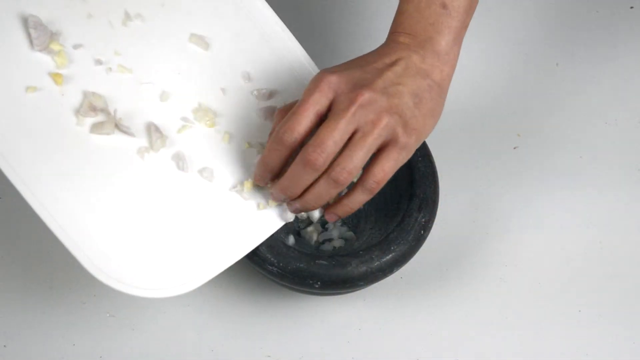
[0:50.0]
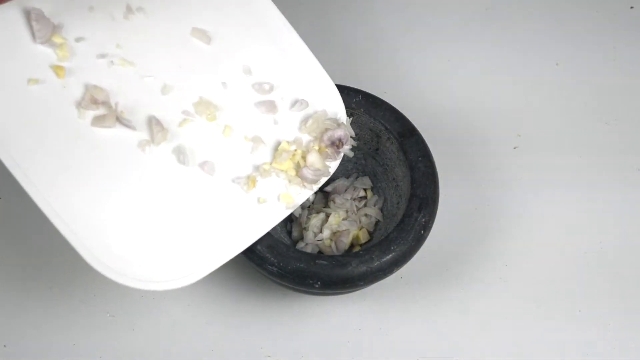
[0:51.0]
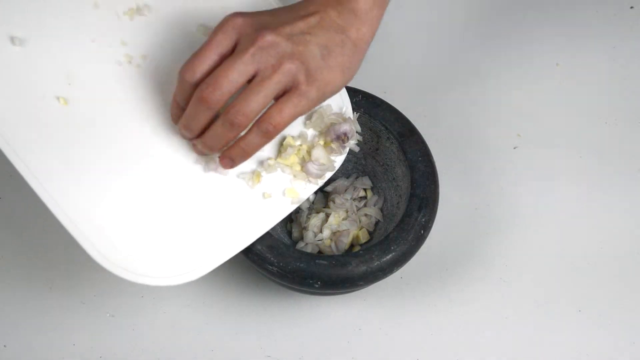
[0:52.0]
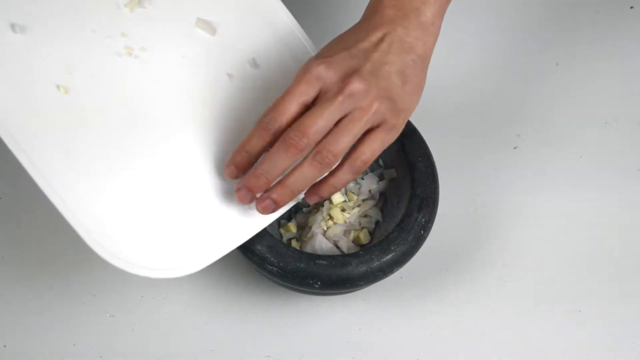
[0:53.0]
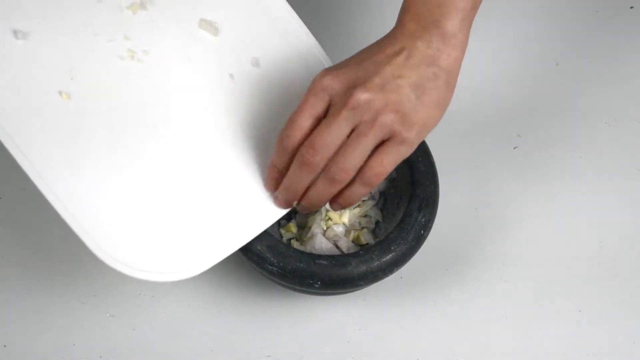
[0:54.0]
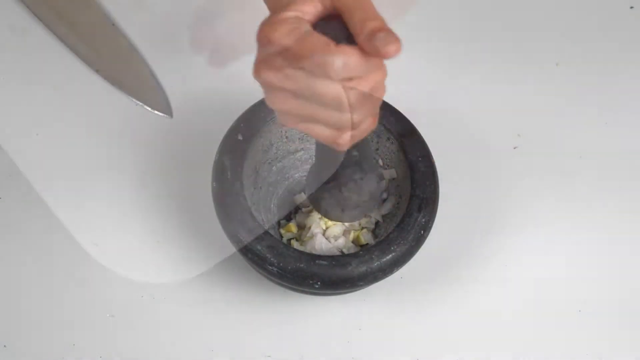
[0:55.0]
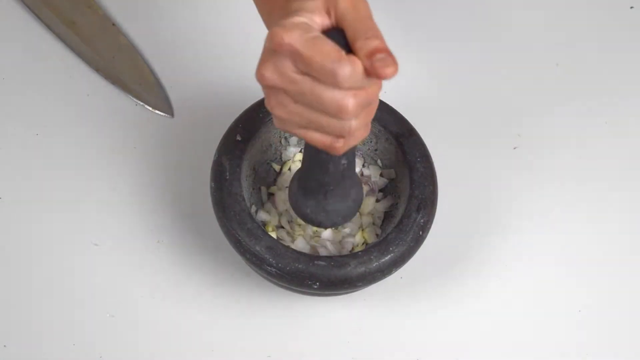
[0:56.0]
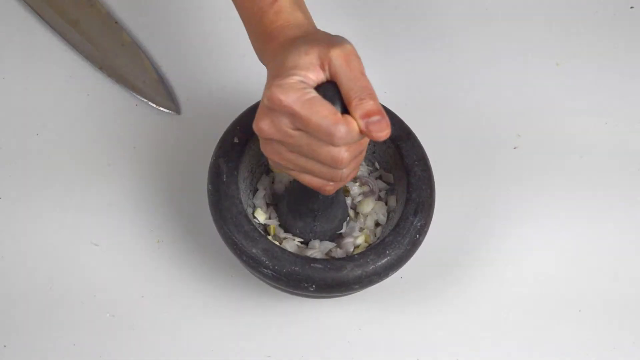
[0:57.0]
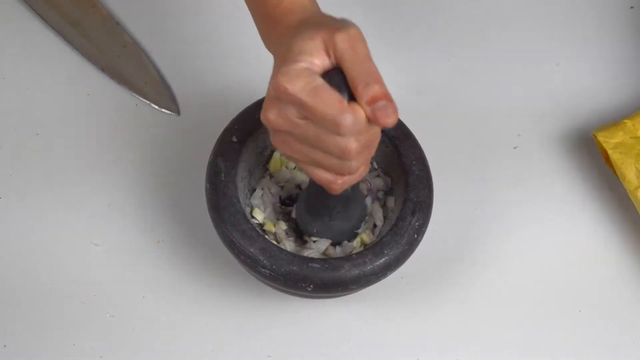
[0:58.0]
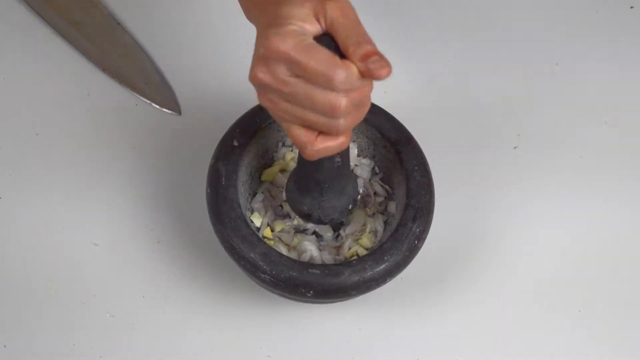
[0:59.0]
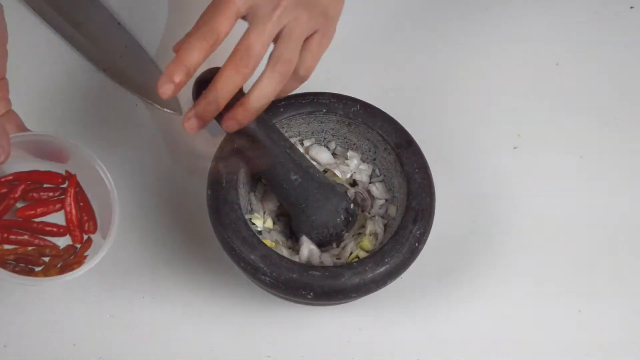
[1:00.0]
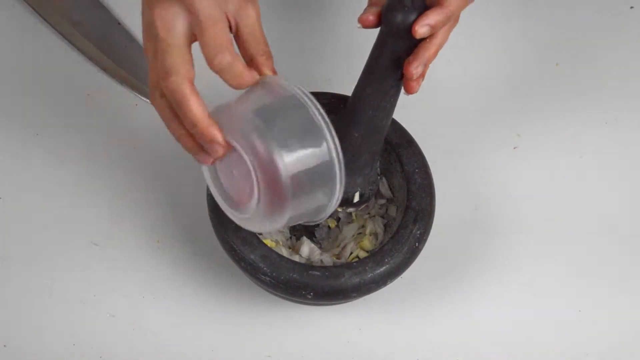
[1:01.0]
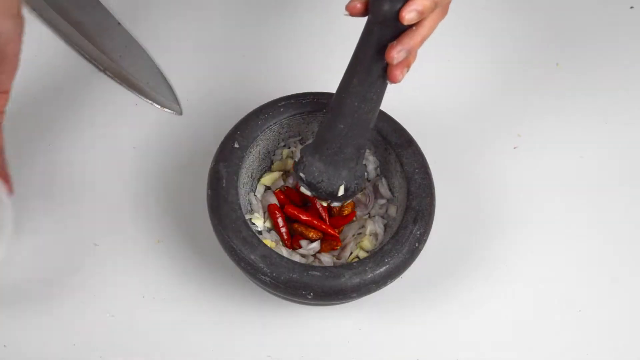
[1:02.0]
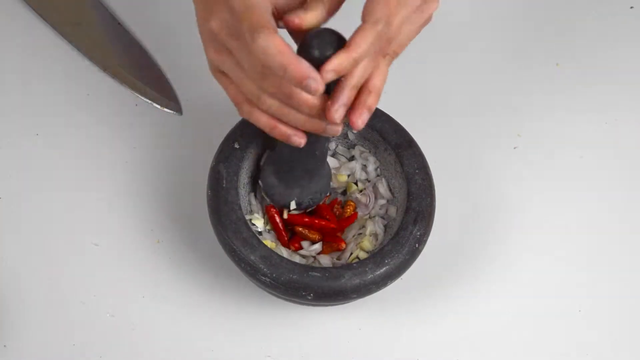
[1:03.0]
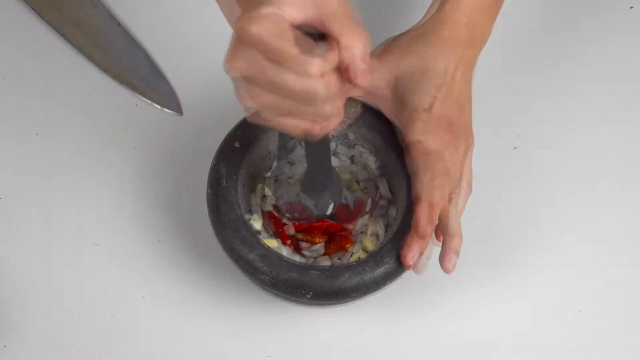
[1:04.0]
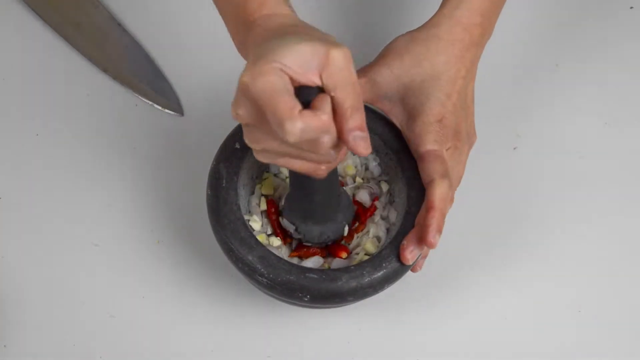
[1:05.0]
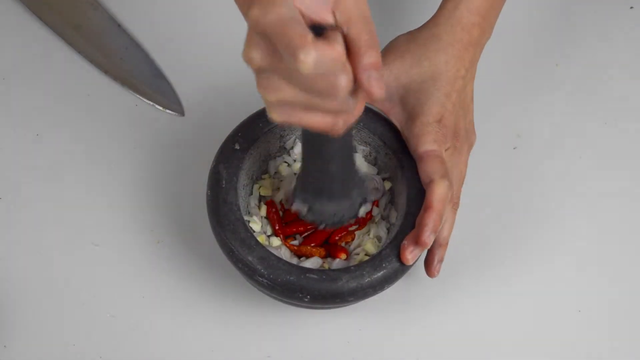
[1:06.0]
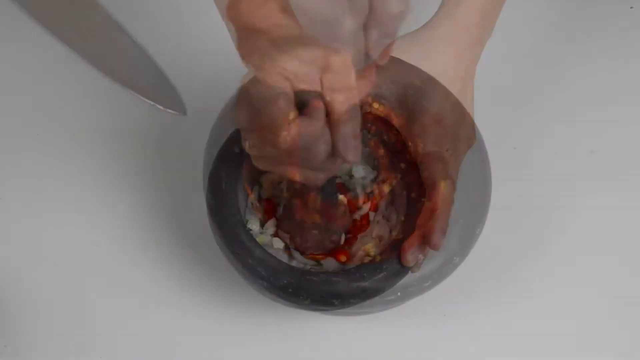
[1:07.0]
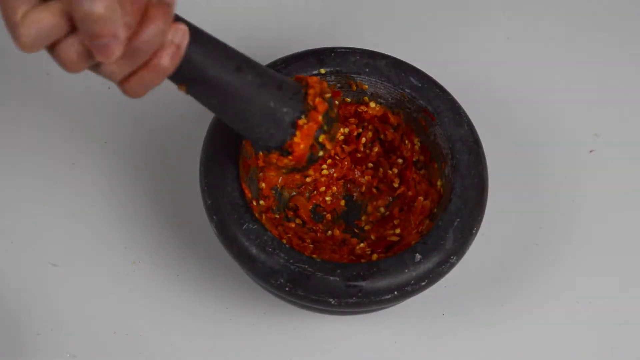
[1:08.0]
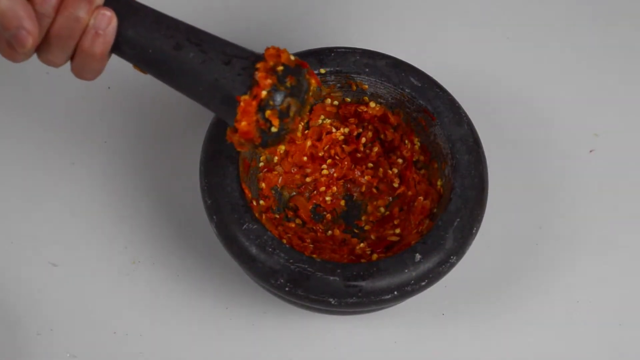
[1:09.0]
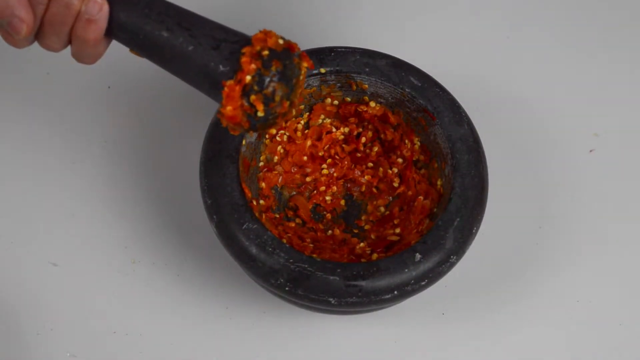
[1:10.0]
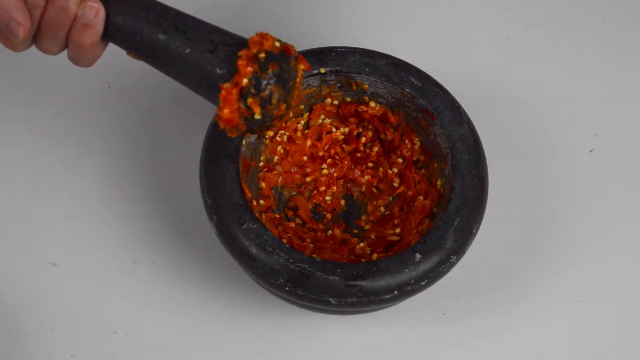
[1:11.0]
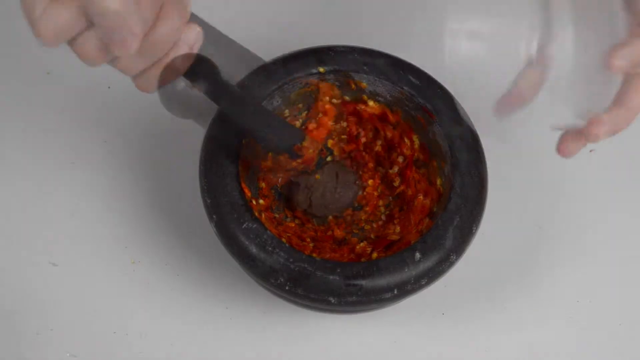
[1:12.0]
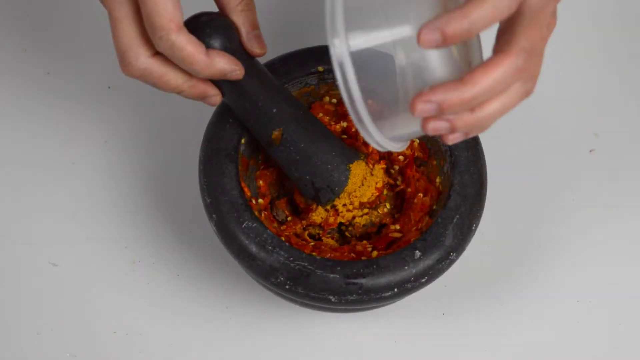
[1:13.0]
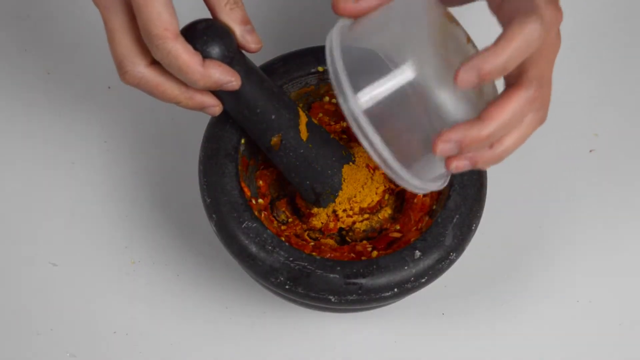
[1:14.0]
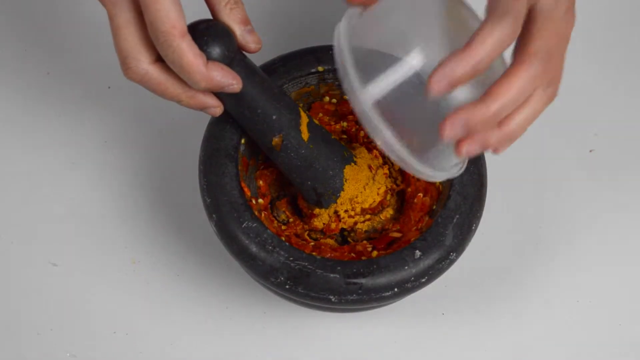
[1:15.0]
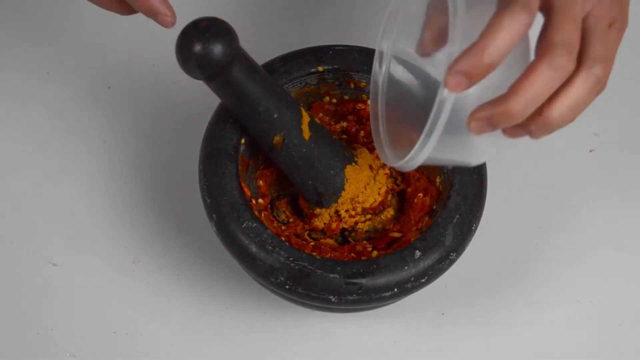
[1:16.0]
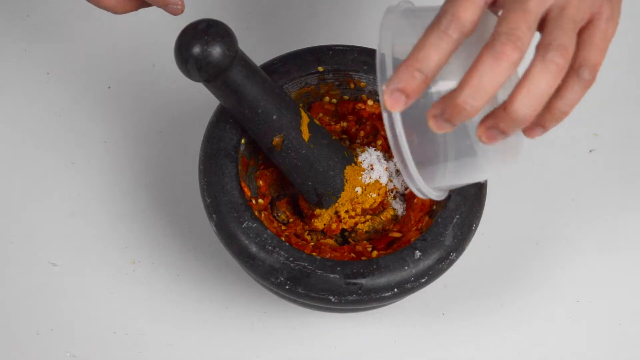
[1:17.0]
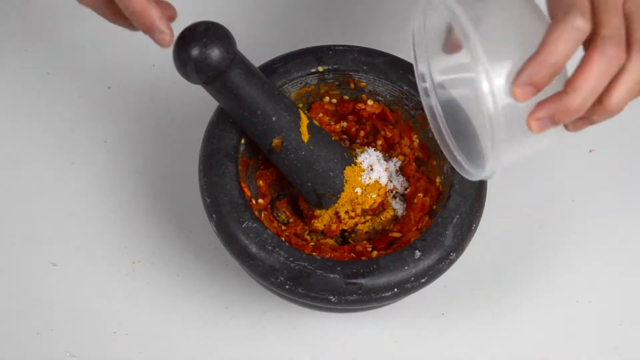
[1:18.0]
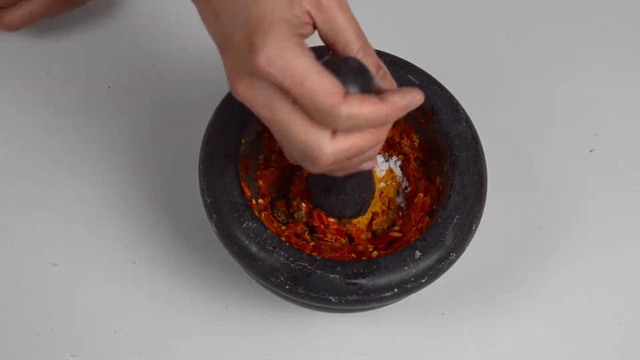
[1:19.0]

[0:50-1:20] A white hand works with a small bowl and a piece of wood used to beat ingredients together into one mixture. The hand puts a mixture of onions and garlic into the bowl, then adds a red chili, then takes the wood and beats it so it mixes well. A knife is on a white table. The mixture is now well mixed, though there seems to be a lot of chili, since the chili is visible. Different spices, sauces, salts and powders are then added and mixed together, including curry, green onions and garlic, to form one thing to cook with.